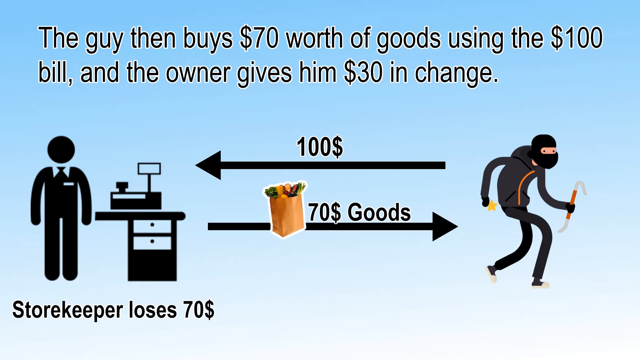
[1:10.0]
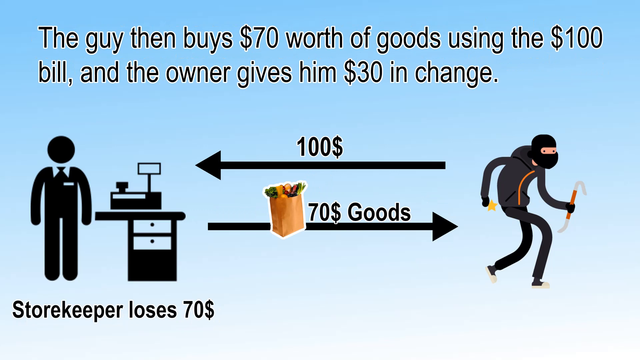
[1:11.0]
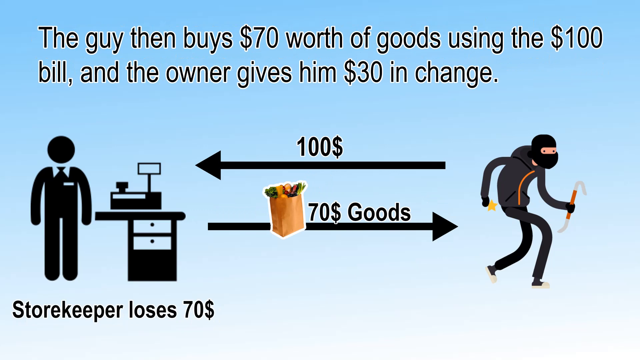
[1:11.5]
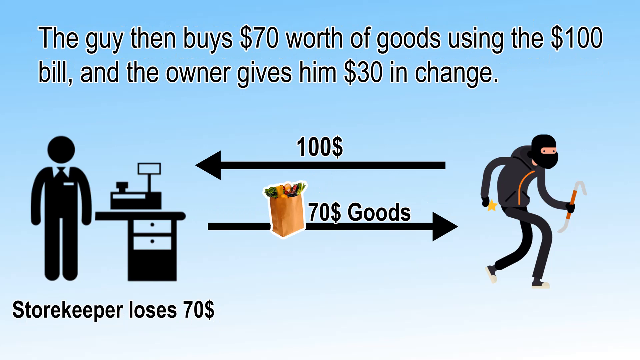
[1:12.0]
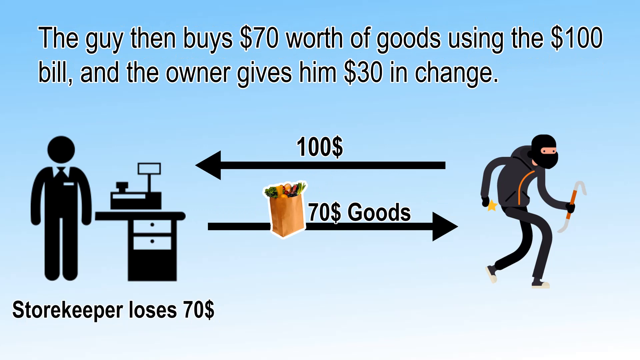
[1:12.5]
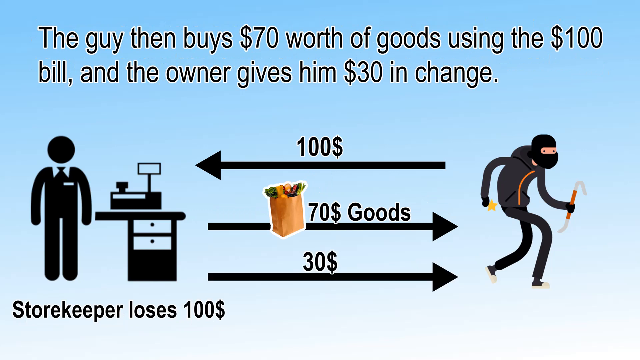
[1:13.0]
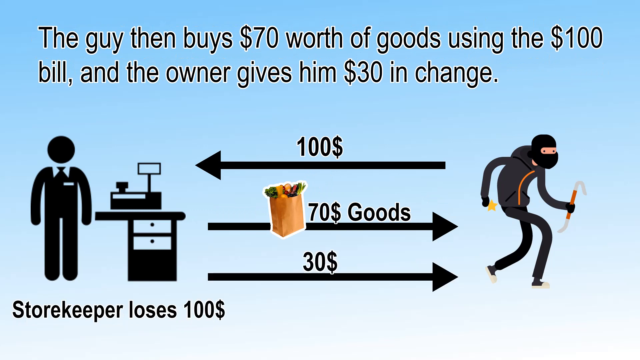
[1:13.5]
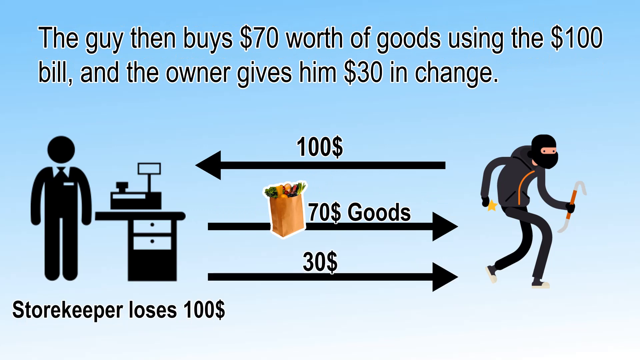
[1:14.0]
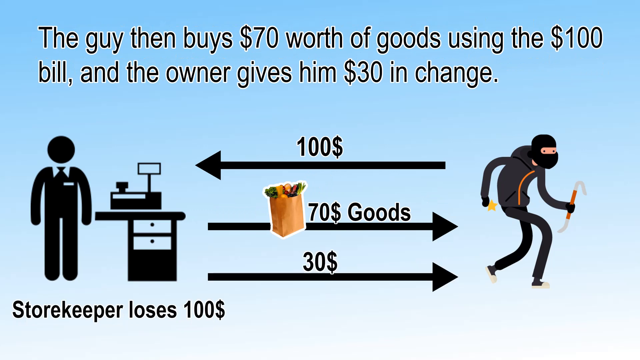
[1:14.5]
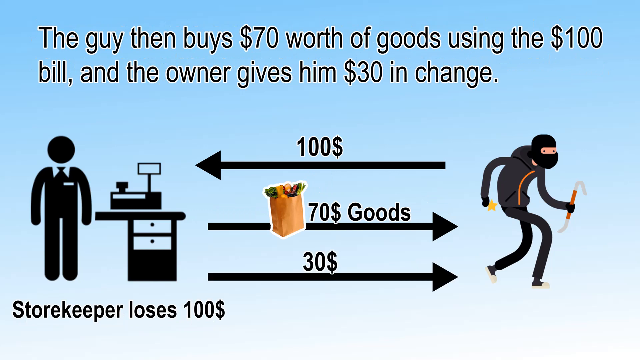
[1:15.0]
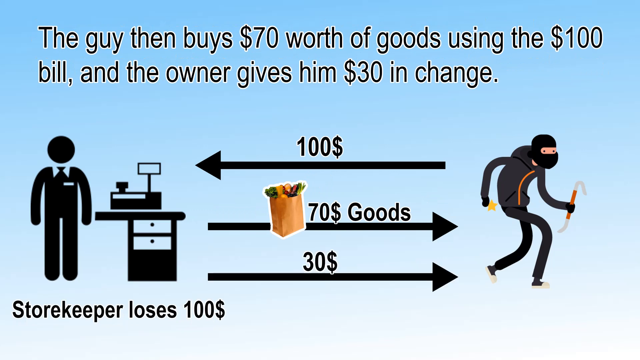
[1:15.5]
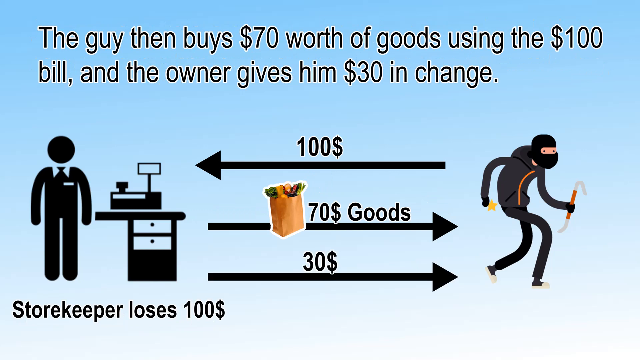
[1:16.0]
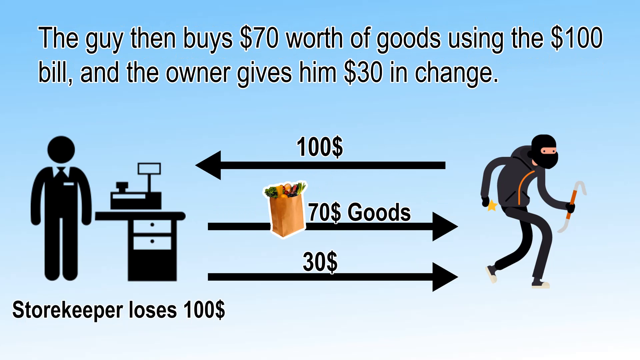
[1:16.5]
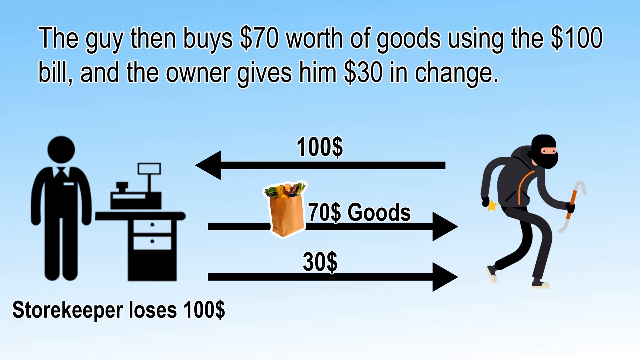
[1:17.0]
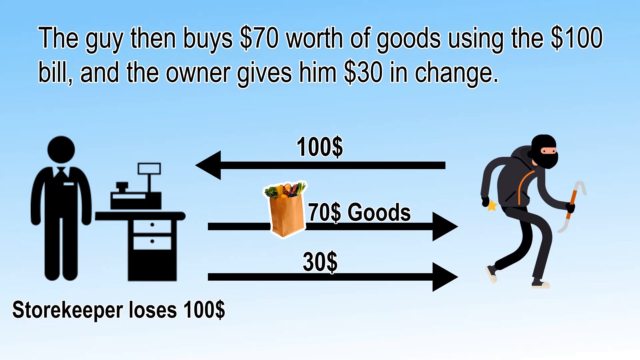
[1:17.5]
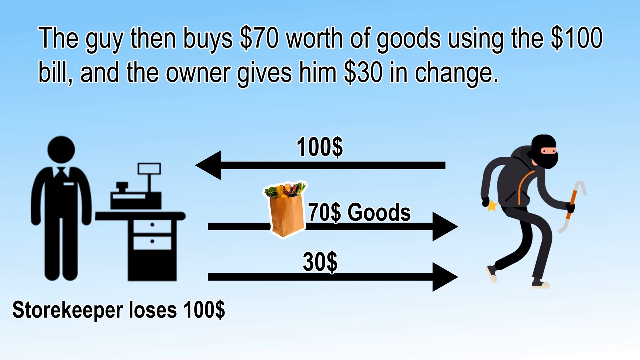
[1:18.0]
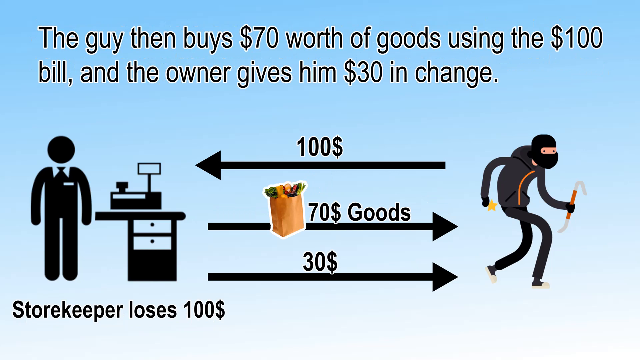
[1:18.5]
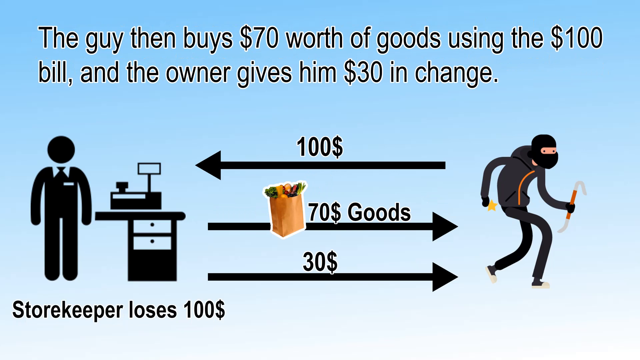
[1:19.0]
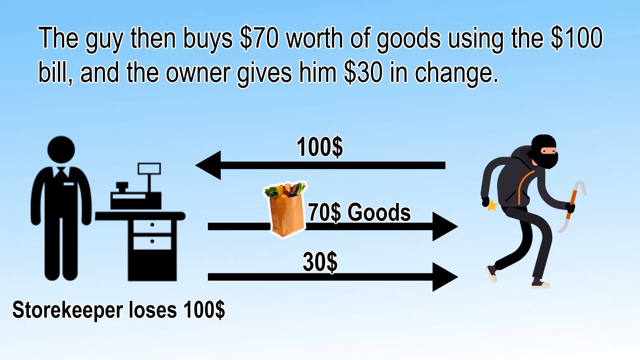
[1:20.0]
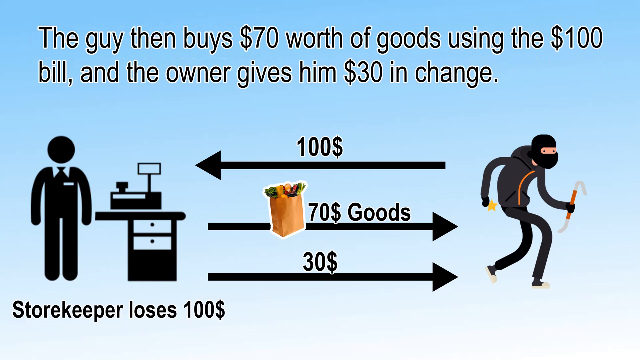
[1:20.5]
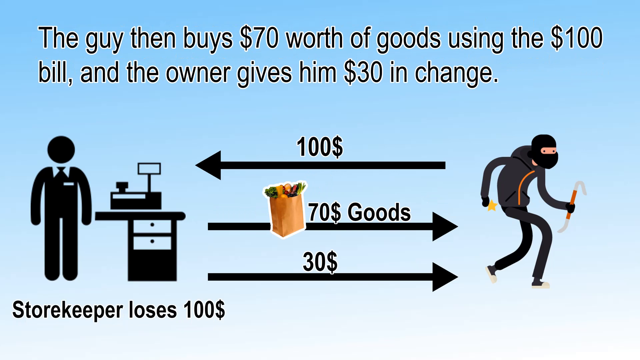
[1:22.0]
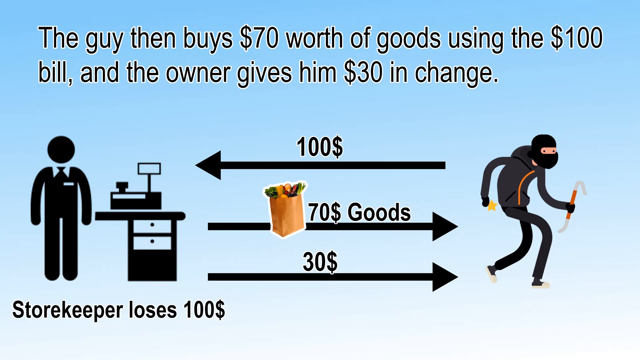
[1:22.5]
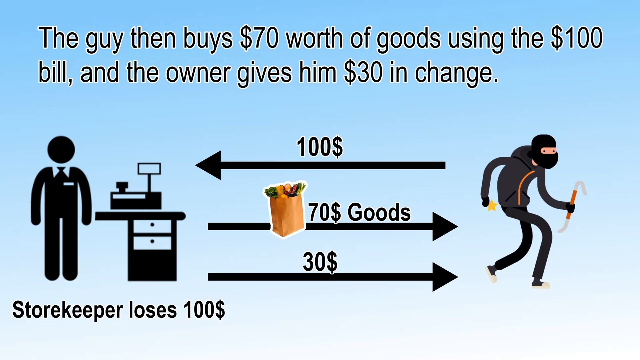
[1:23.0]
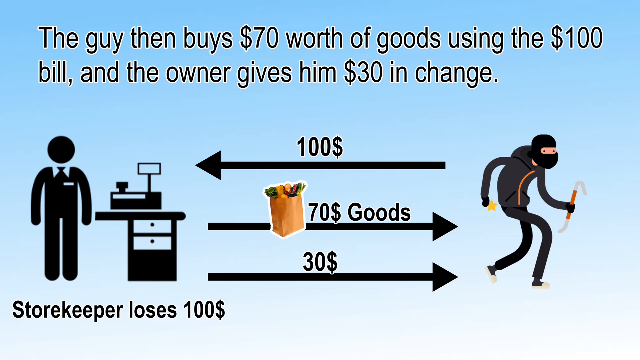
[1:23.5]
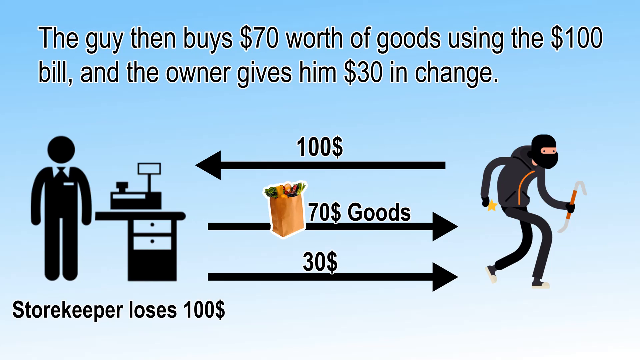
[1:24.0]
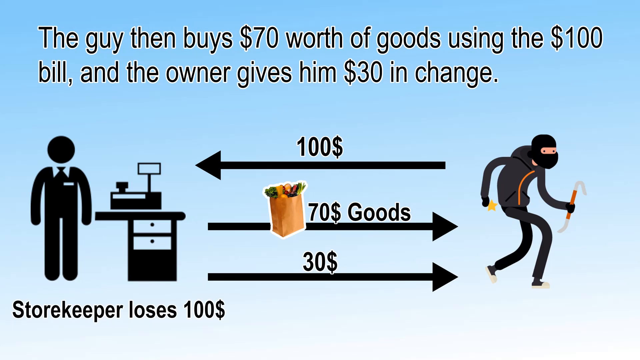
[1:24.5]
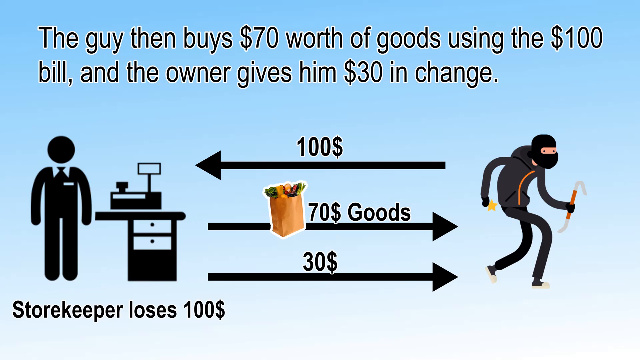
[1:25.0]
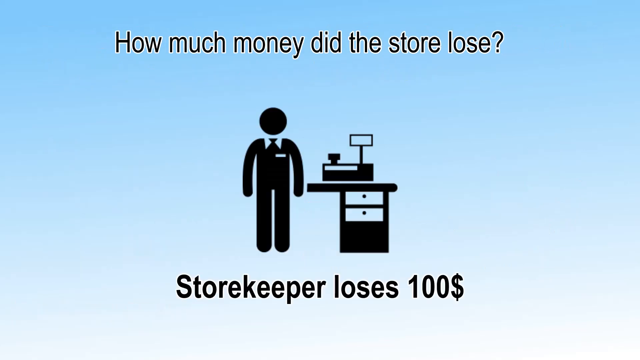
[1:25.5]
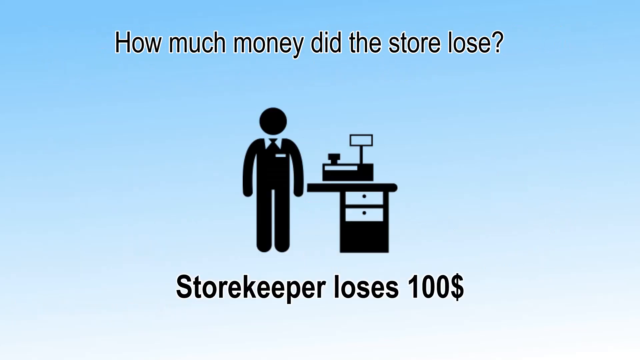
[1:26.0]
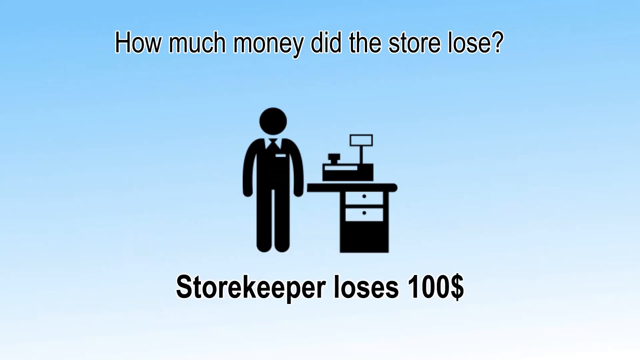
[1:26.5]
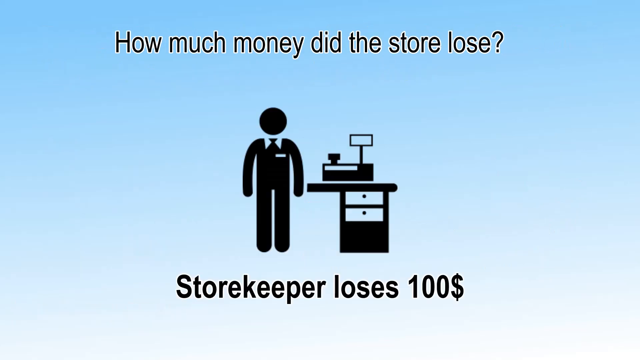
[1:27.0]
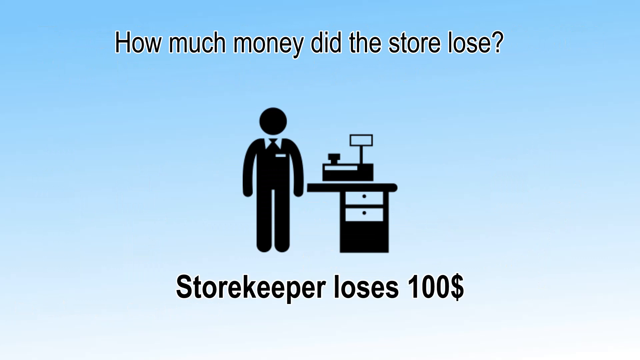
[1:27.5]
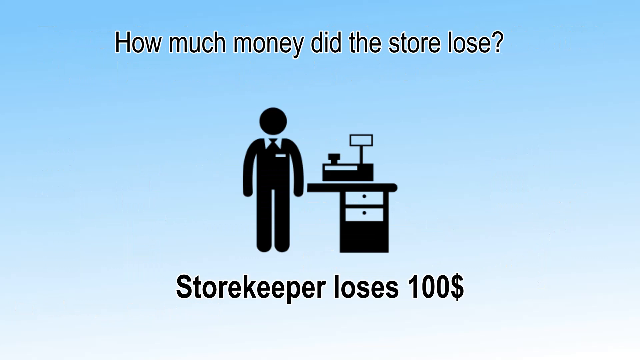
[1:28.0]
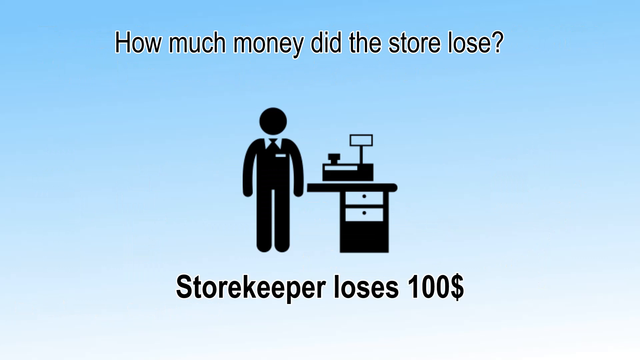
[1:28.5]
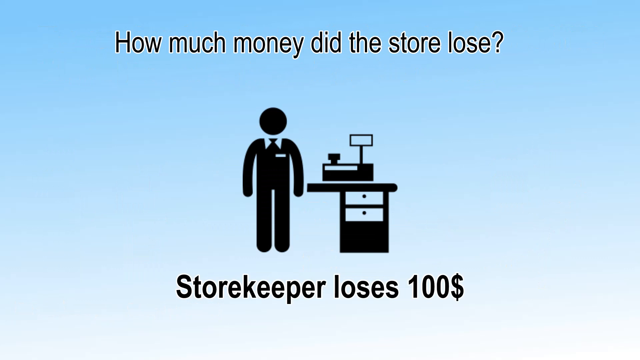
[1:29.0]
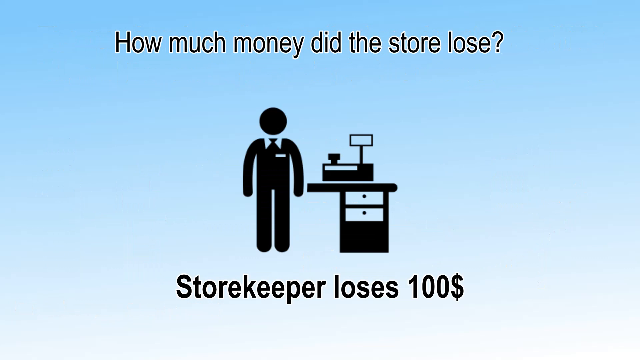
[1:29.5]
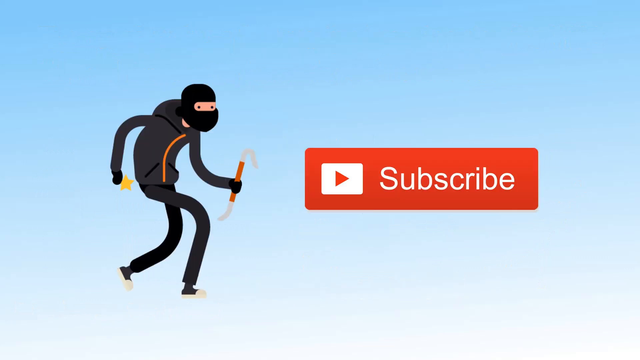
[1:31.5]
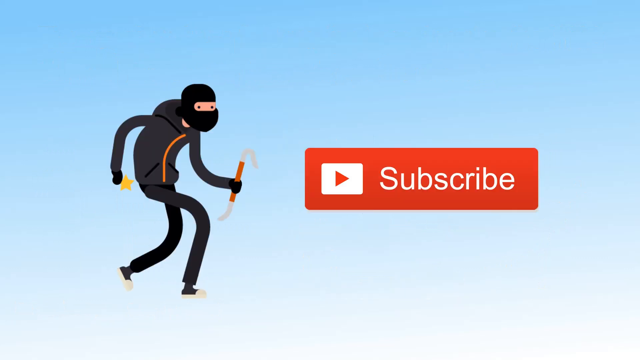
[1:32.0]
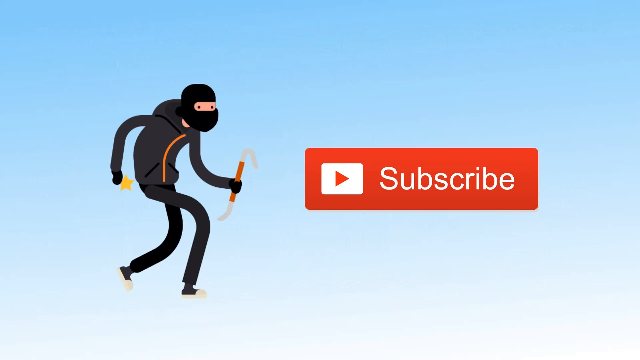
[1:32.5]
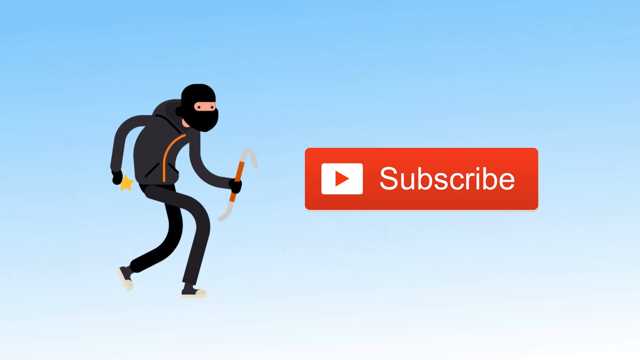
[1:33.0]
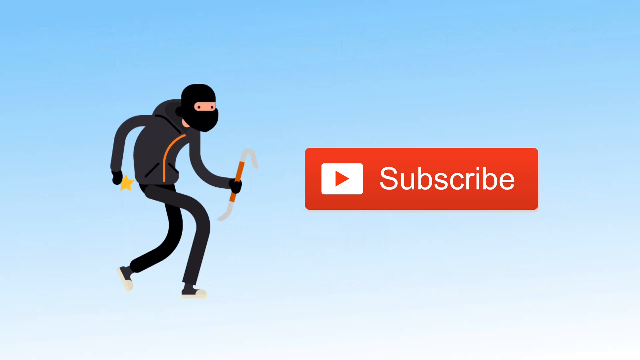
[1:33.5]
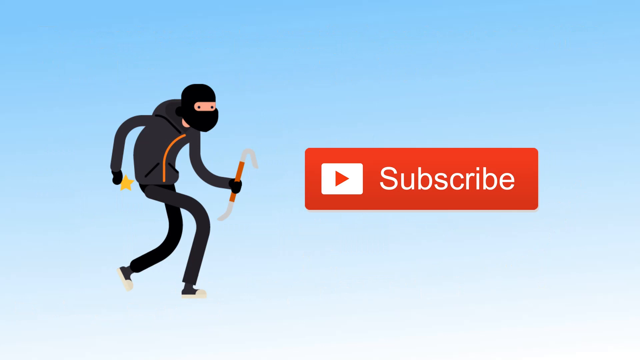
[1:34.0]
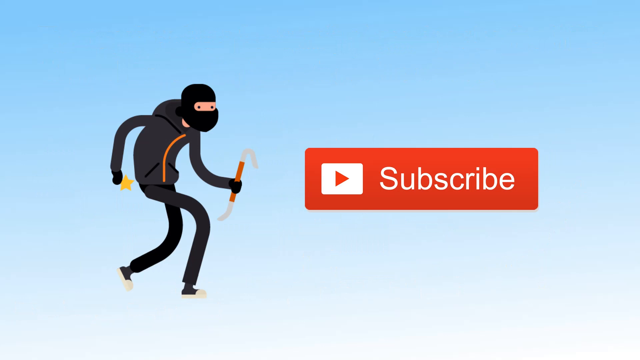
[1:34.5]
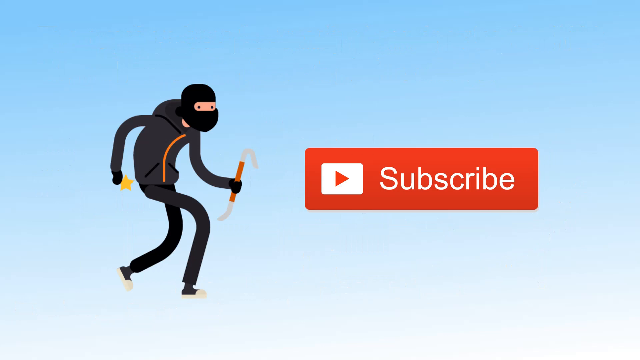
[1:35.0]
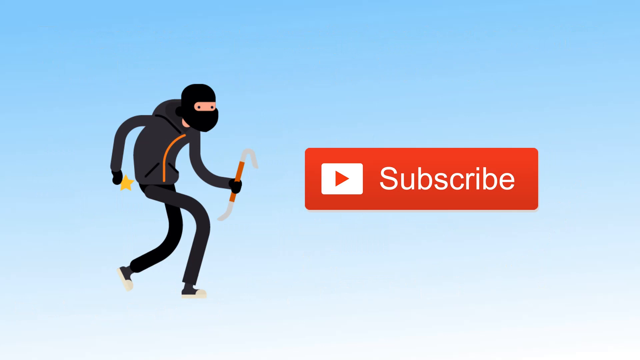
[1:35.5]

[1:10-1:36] On a blue background, a clip art image of a man next to a cash register is on the left and a clip art cartoon image of a thief is on the right. An arrow pointing left goes from the thief to the man at the register with "$100" above it, and underneath it an arrow points from the man at the register to the thief with a bag of groceries above it and the text "$70 goods." Text at the top of the screen says "the guy then buys $70 worth of goods using the $100 bill and the owner gives him $30 in change," and at the bottom it says "storekeeper loses $70." Another arrow then pops up, pointing from the man at the register to the thief, labeled "$30."

The scene changes to just the clip art silhouette of the man standing next to the cash register, with the top text "how much money did the store lose?" and the bottom text "storekeeper loses $100." The scene changes again to a red YouTube subscribe button, with the clip art thief to its left, dressed in all black and holding a crowbar in one hand and a yellow star in the other.